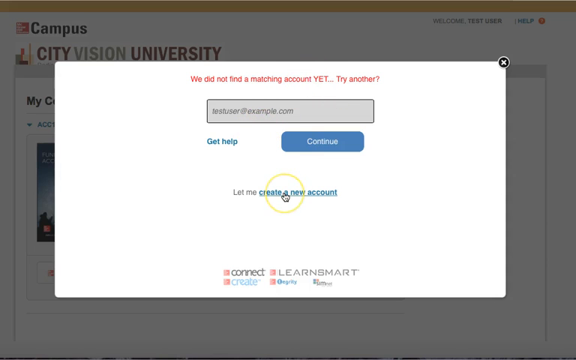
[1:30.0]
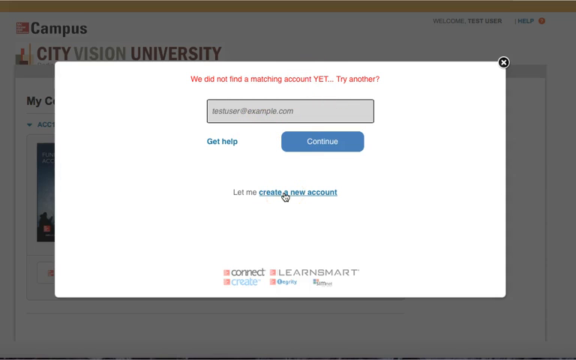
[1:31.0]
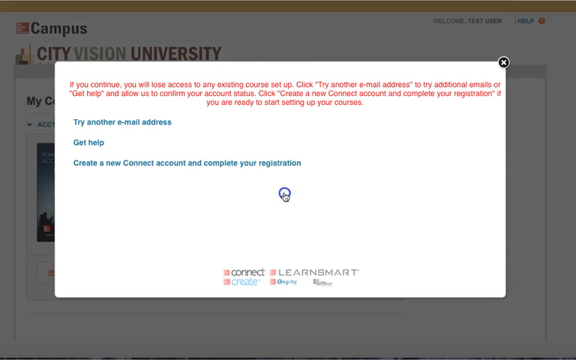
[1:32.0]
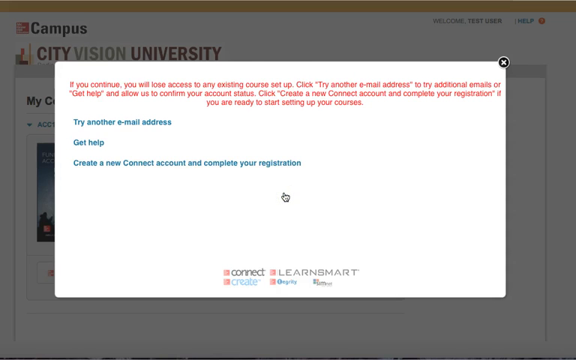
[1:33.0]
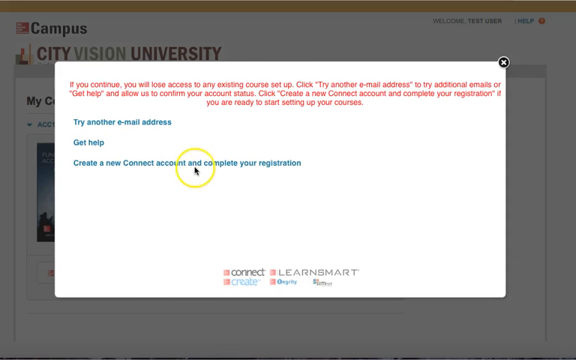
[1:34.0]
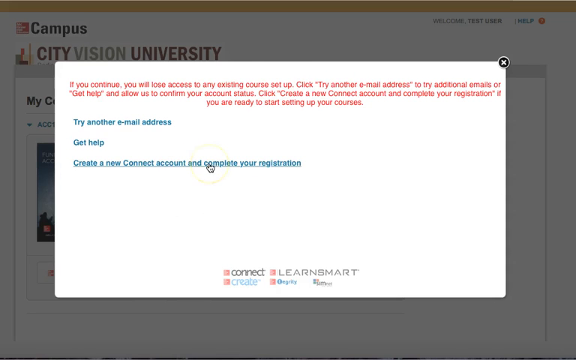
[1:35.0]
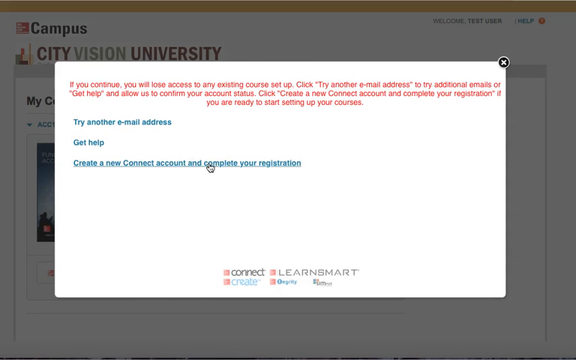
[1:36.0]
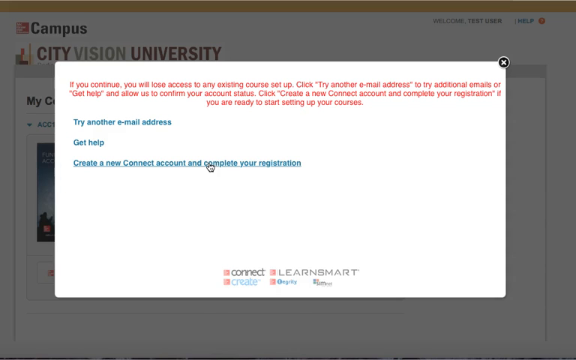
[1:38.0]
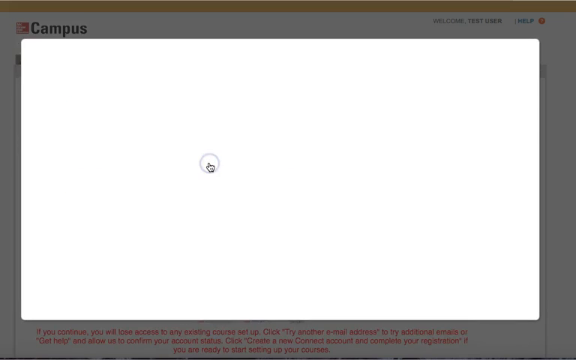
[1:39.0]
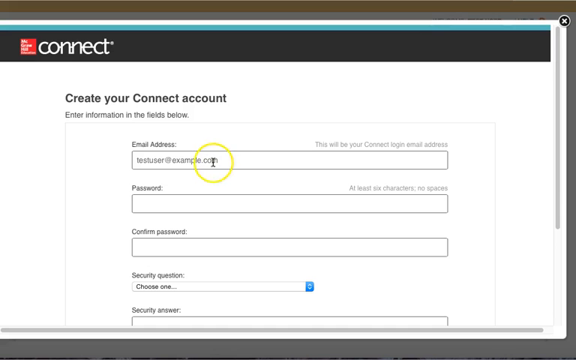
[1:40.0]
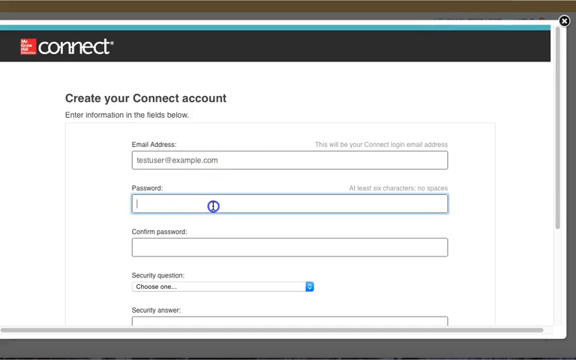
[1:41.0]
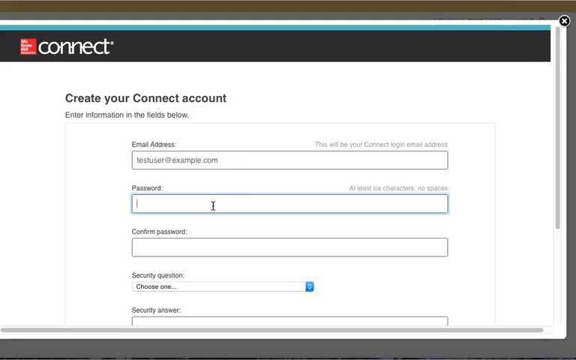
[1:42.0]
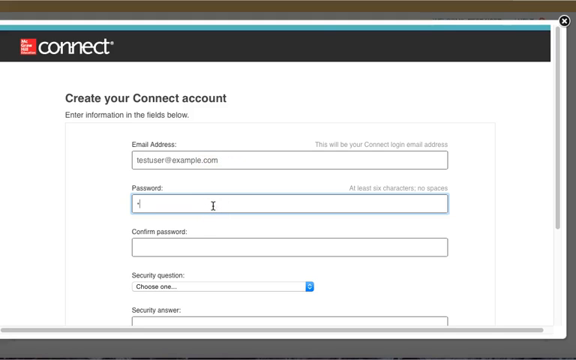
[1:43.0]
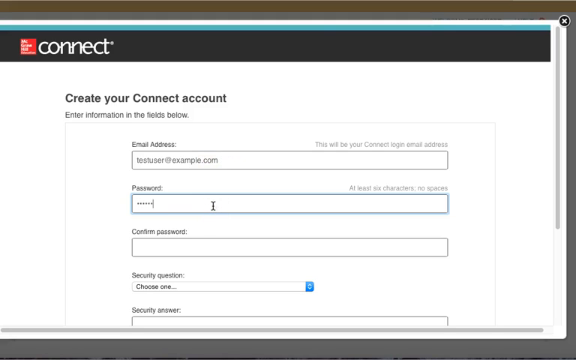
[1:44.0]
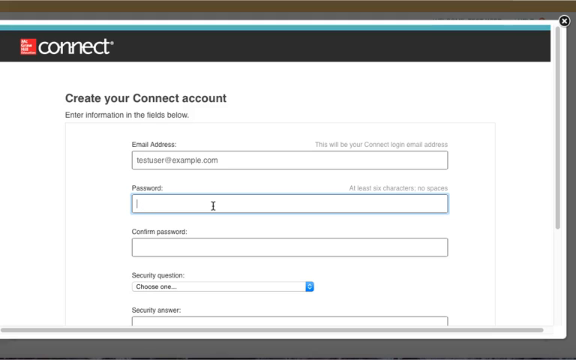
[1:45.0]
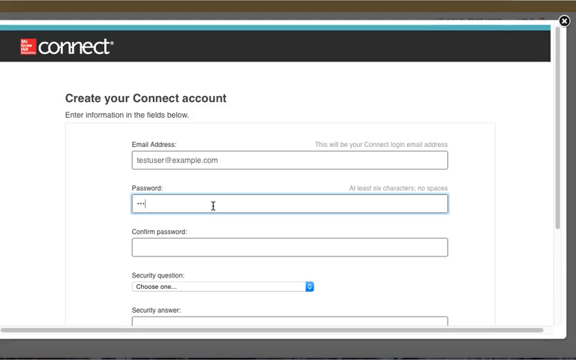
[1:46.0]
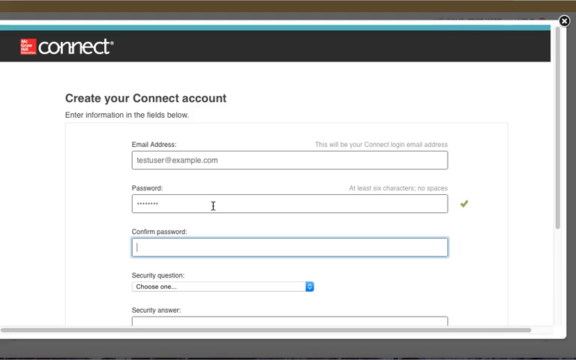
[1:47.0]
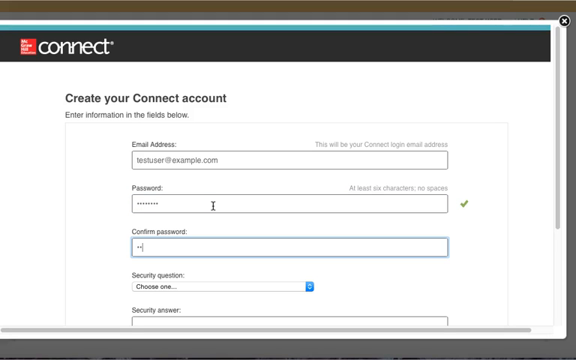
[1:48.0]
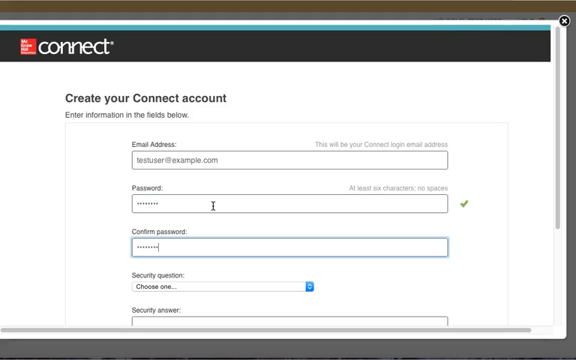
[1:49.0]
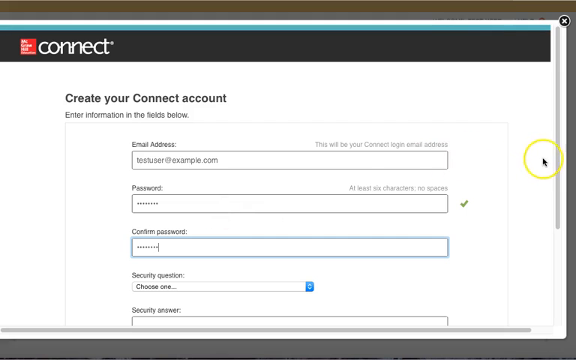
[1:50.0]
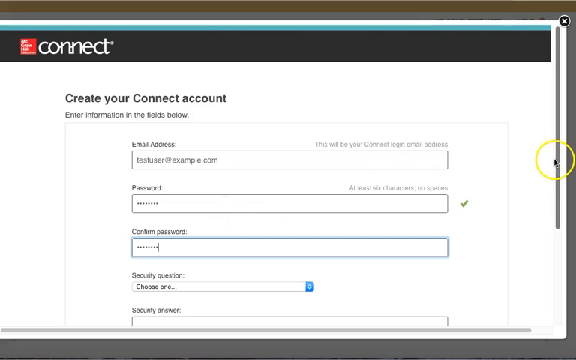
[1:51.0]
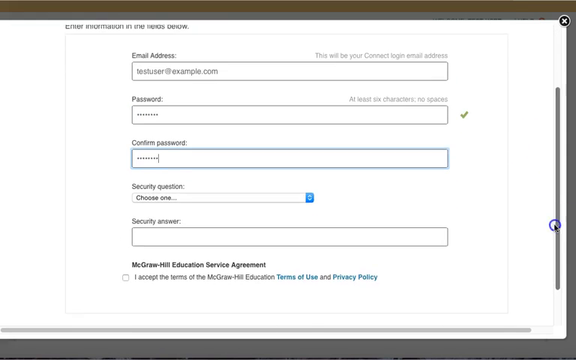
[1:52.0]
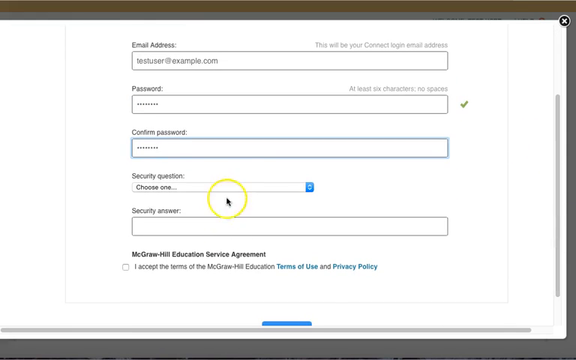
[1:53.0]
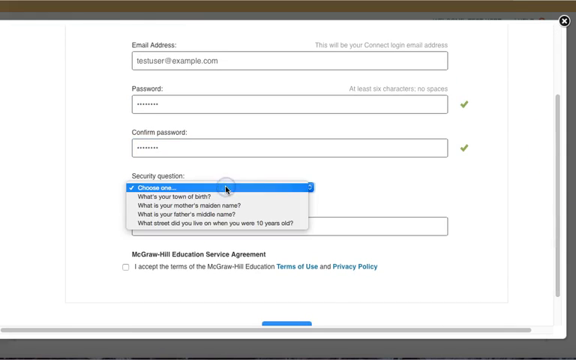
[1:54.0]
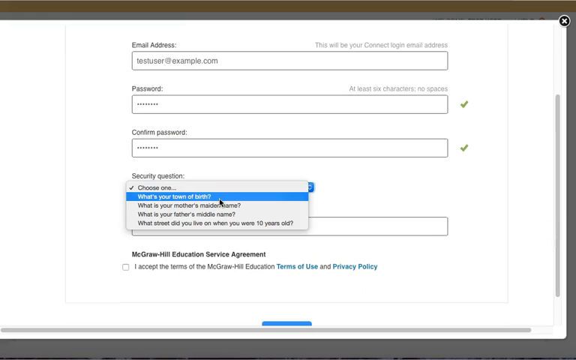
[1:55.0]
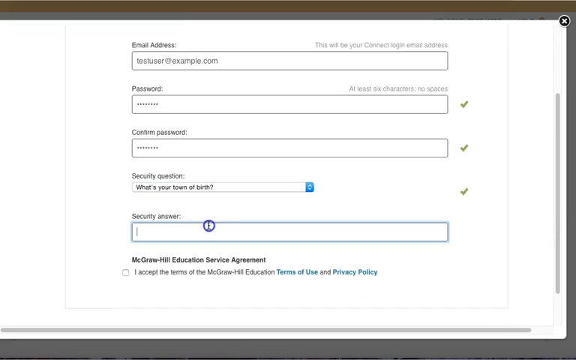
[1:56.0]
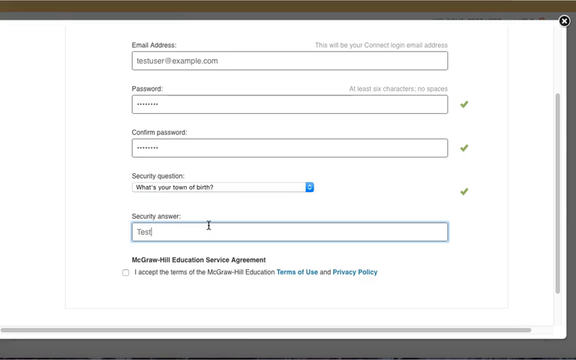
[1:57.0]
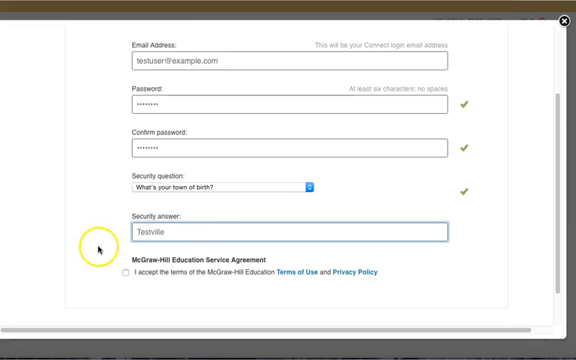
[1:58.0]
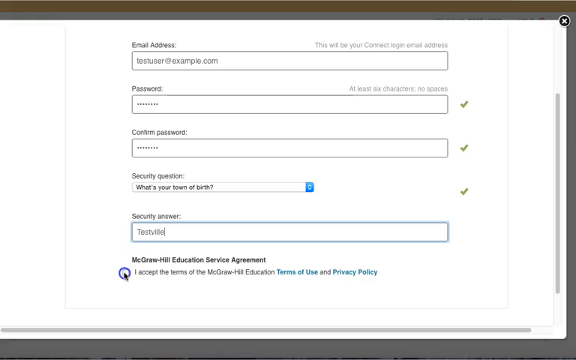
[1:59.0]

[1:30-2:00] On the screen for finding an account by email, the person clicks "create a new account". A page appears warning that making a second account when one already exists can cause issues when accessing courses. He clicks "create a new connect account and complete your registration", and after a few seconds of loading a create-your-account form appears, asking for an email, a password, the password retyped, a security question and its answer, and acceptance of the terms of service and privacy policy. He types in all the information and clicks to accept the terms and privacy policy, and the shot cuts off.